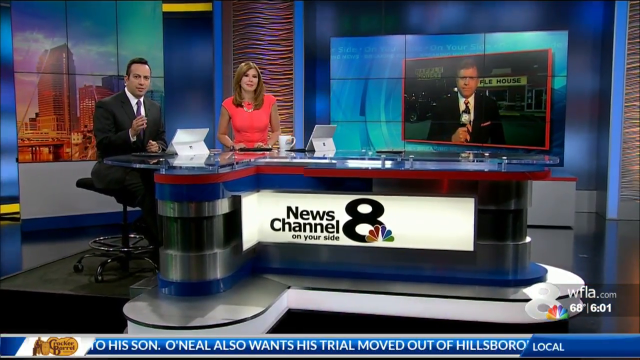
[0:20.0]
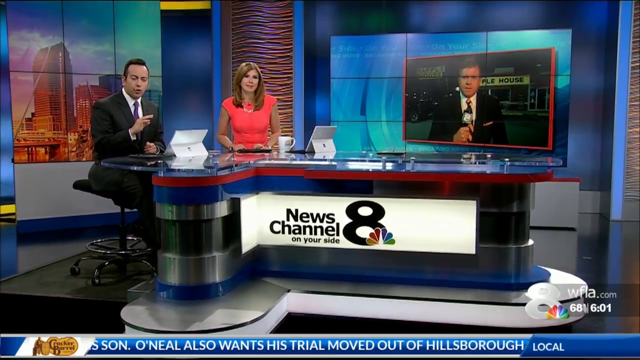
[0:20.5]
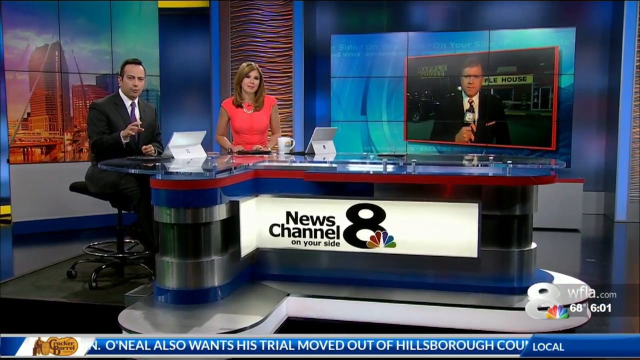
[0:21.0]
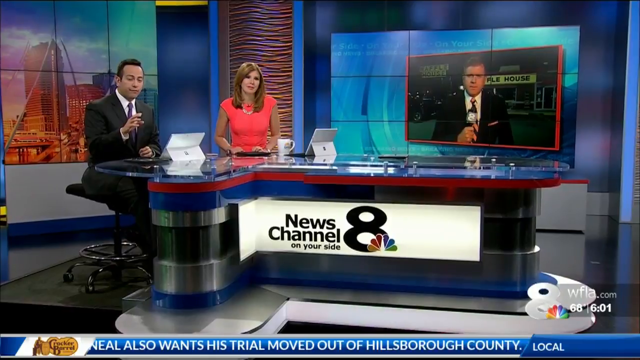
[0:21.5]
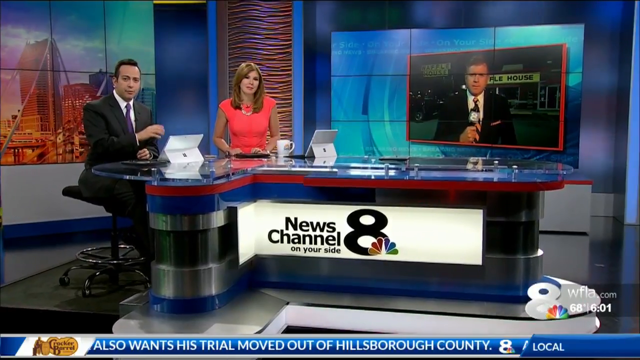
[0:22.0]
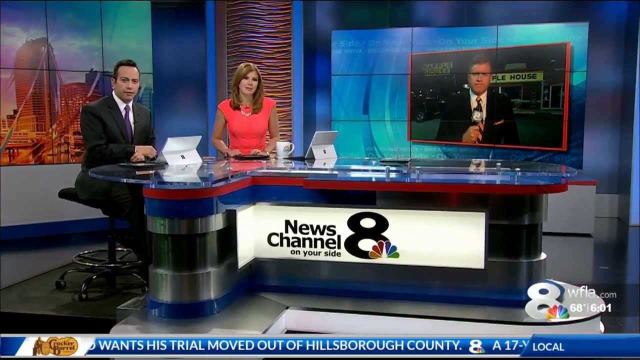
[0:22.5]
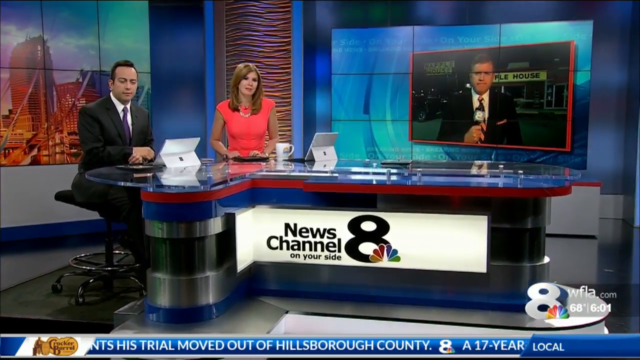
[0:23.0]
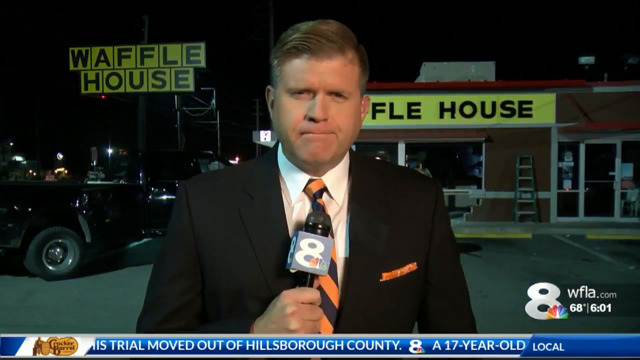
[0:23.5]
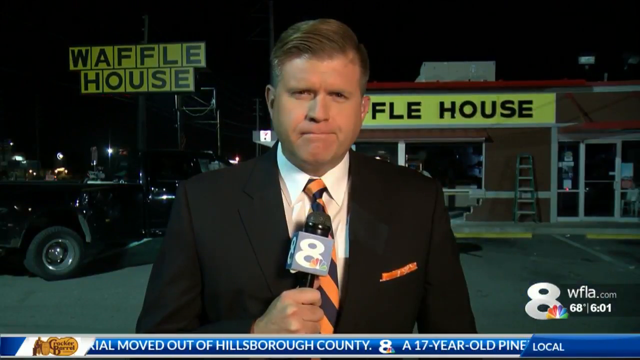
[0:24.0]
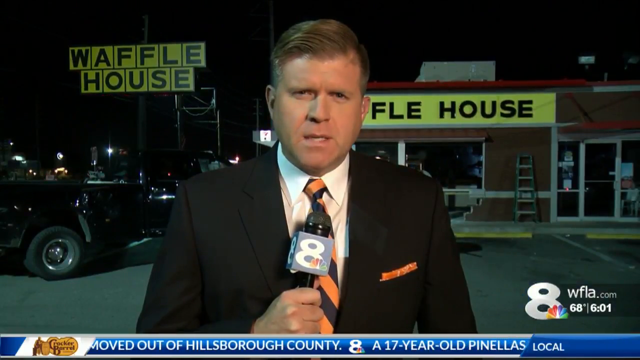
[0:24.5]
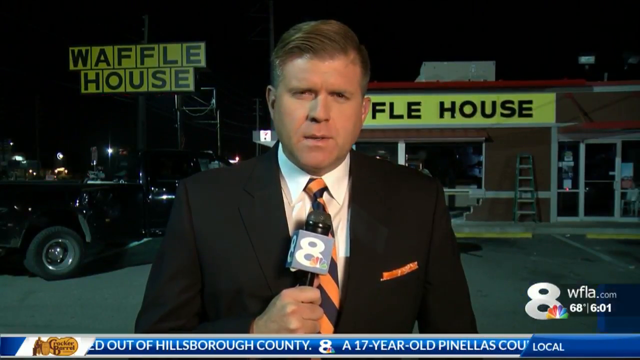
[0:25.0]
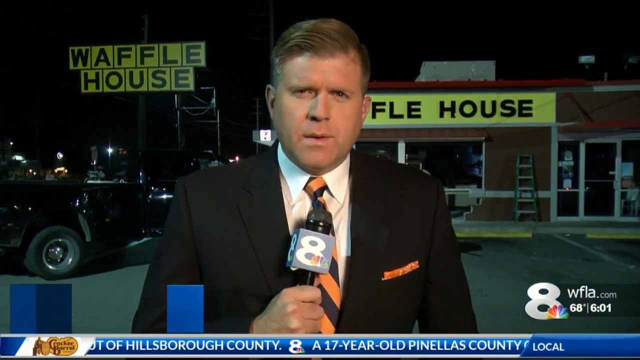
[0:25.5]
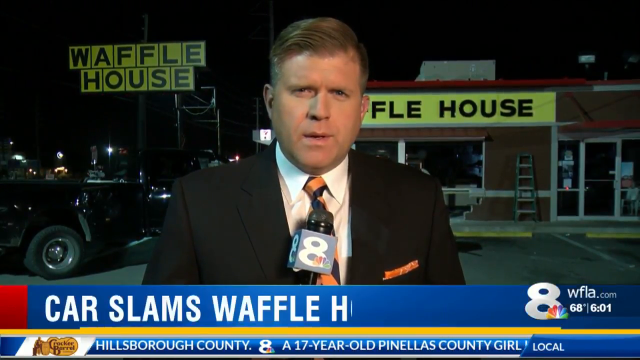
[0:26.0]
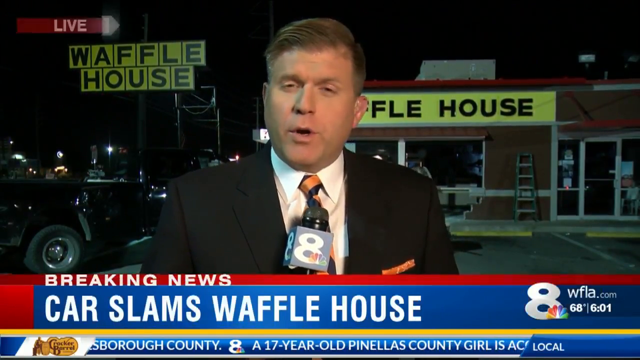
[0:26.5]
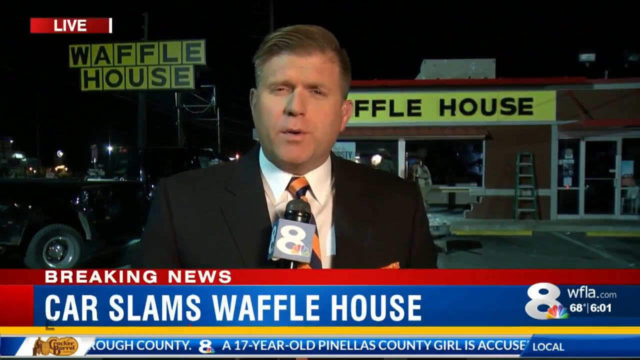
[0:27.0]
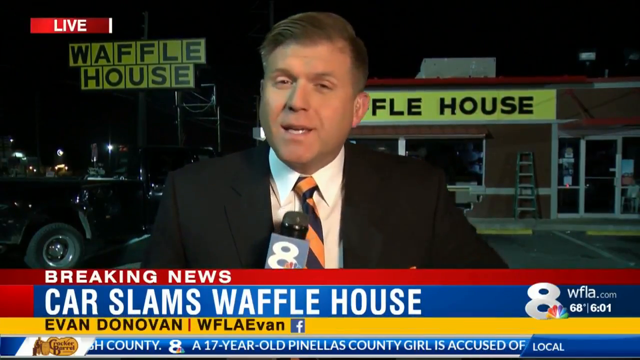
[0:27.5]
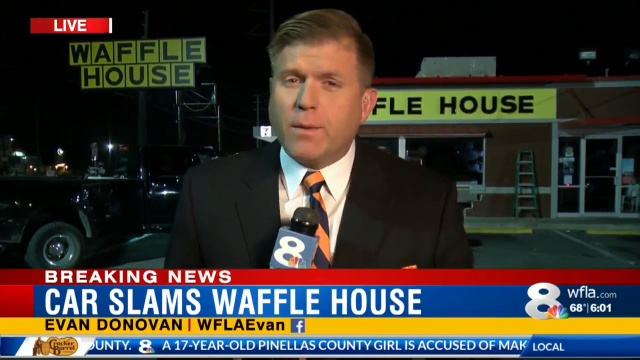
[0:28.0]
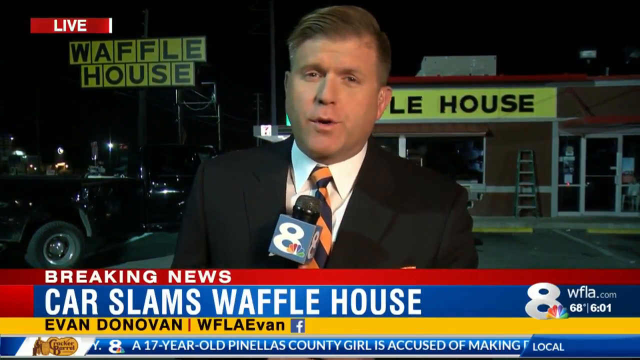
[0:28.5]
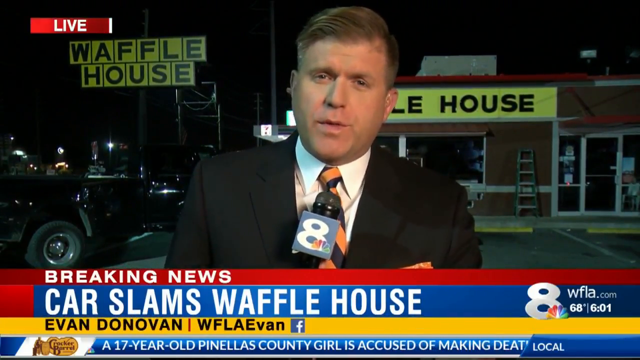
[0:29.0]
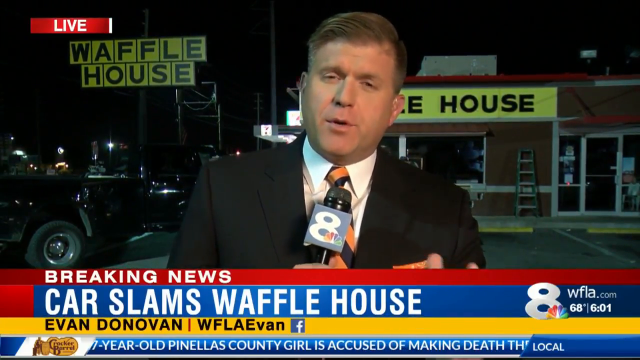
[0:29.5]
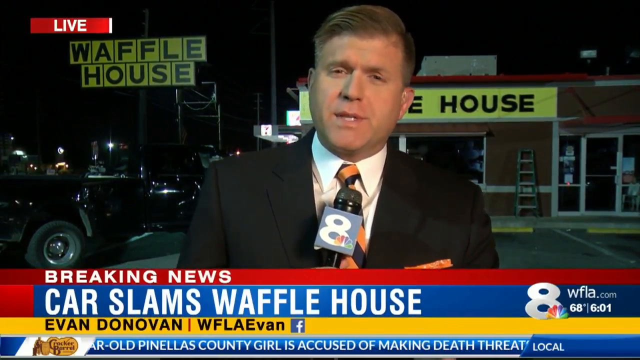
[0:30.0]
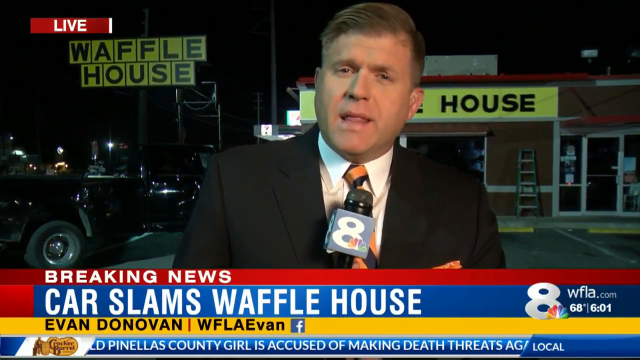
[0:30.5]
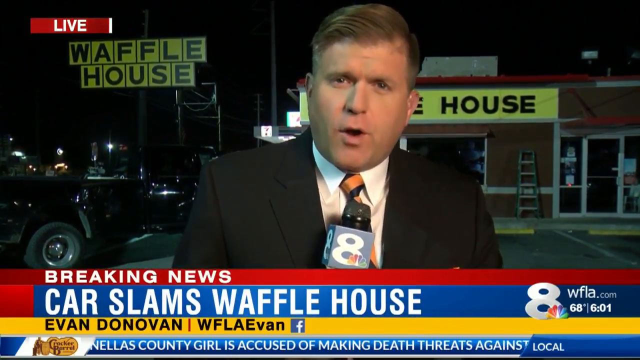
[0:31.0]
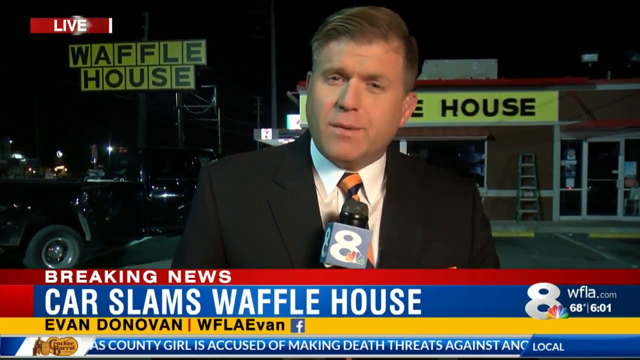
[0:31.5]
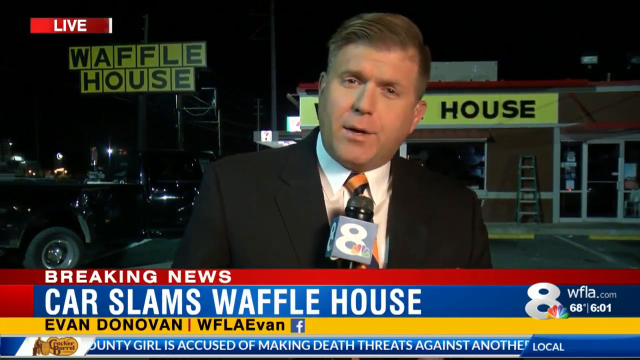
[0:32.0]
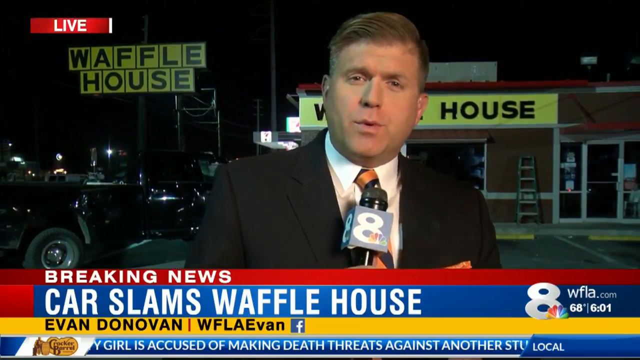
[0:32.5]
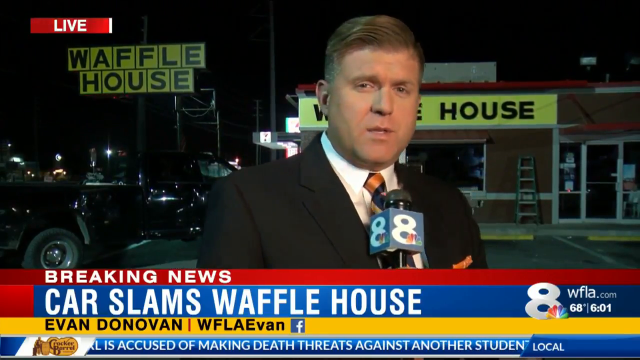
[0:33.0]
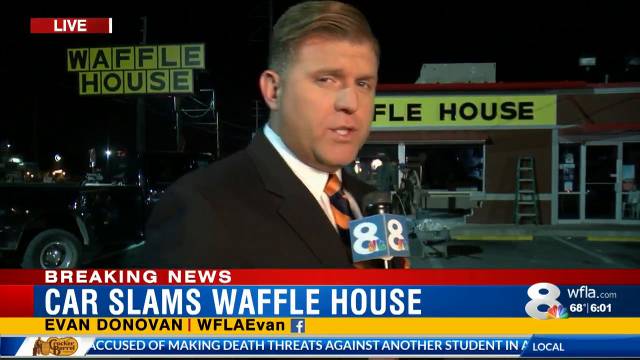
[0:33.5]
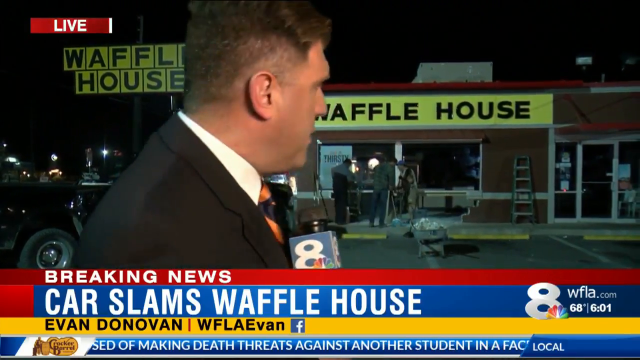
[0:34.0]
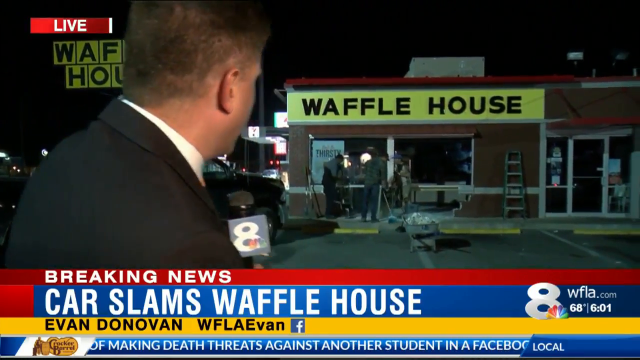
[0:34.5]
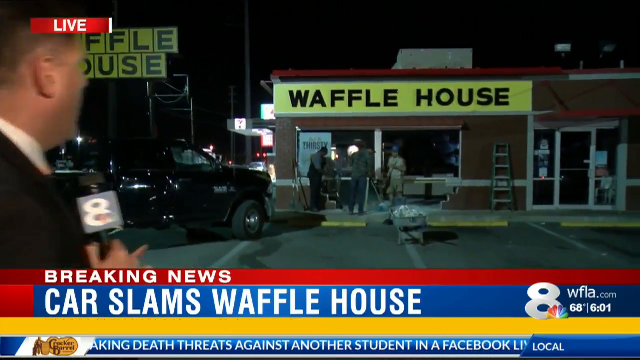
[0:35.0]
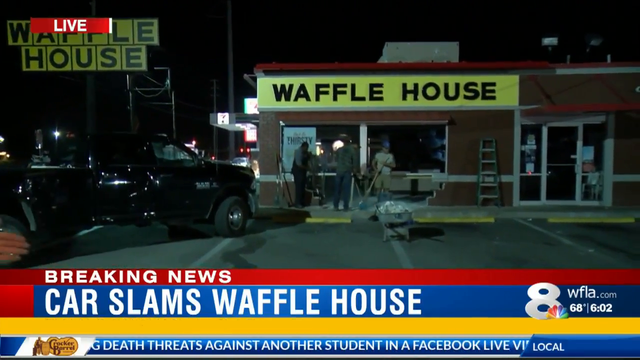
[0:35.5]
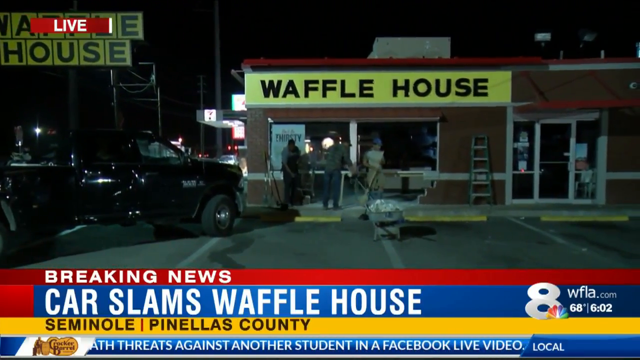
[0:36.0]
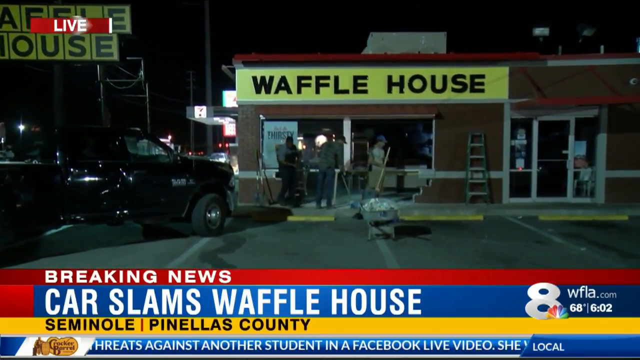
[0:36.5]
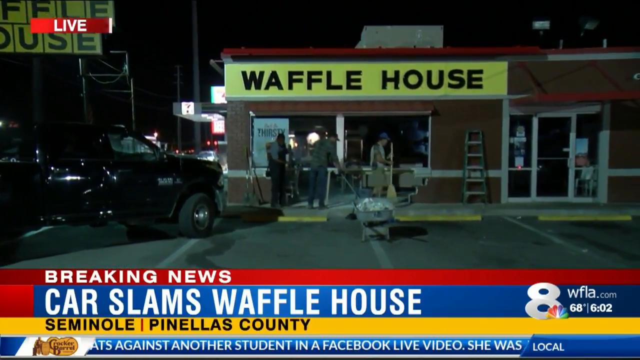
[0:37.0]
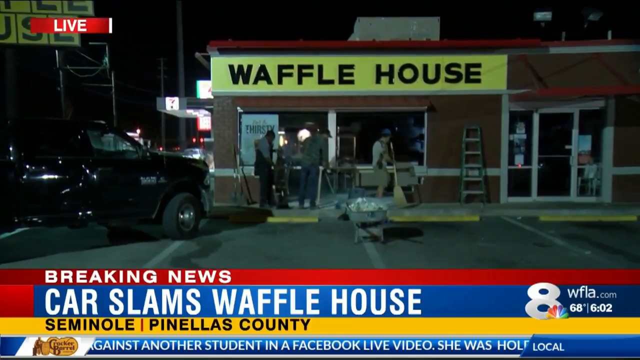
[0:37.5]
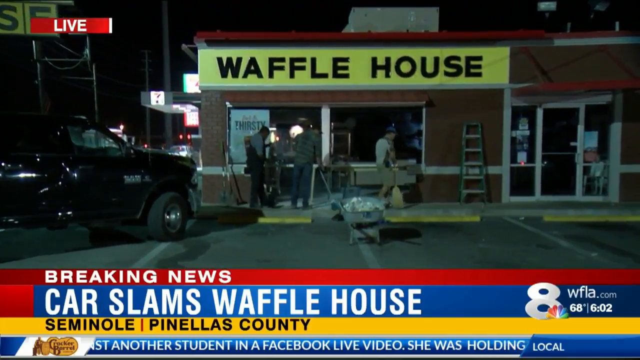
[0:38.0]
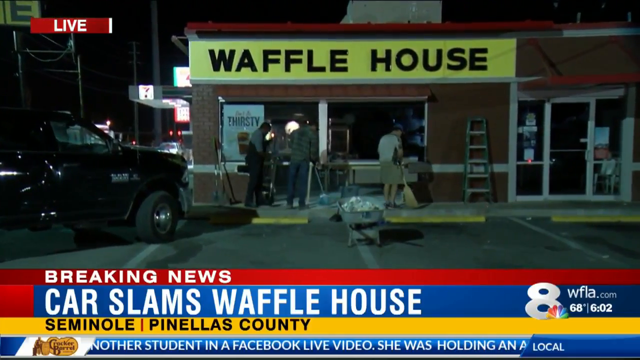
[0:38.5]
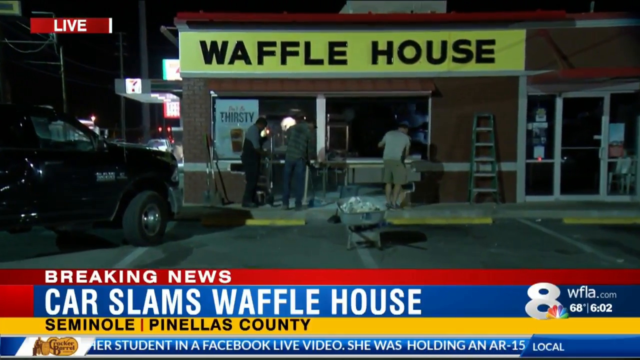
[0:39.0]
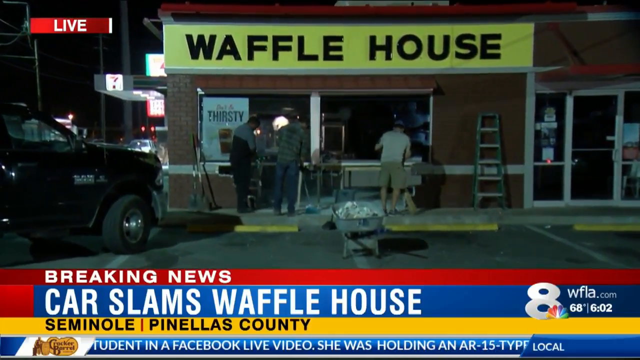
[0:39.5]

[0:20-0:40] A reporter, Evan Donovan, is live from the Waffle House, and the two reporters in the newsroom watch him. People at the scene are already cleaning up. The channel is News Channel 8, and the text "News Channel 8 on your side" appears on screen, apparently the channel's slogan. In the newsroom, a woman and a man have tablets in front of them.